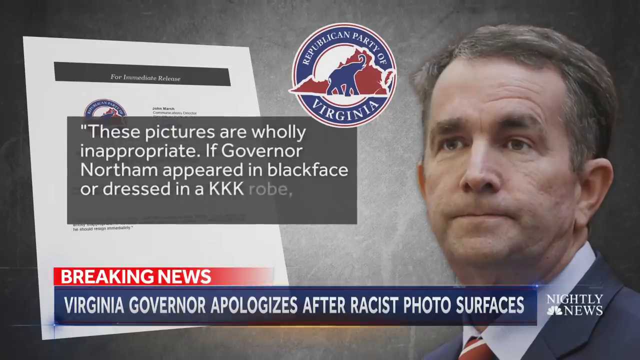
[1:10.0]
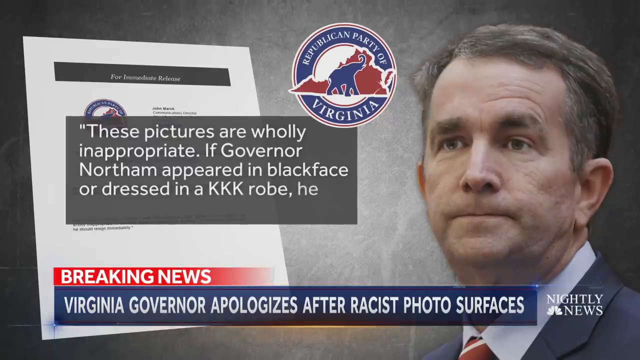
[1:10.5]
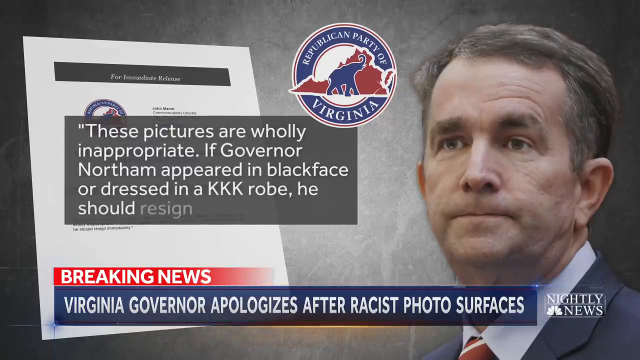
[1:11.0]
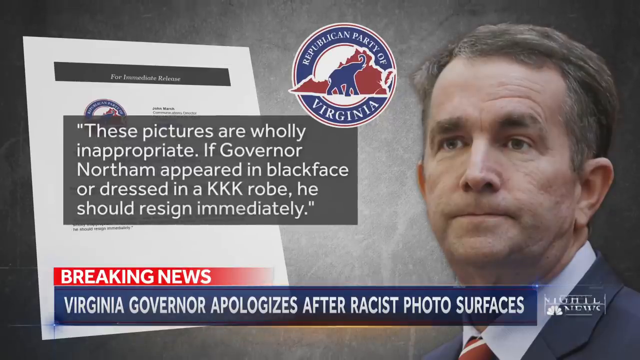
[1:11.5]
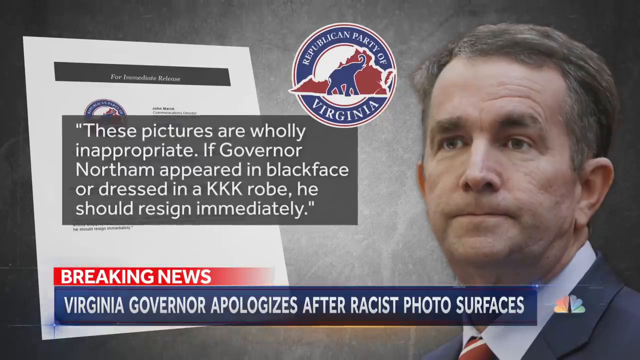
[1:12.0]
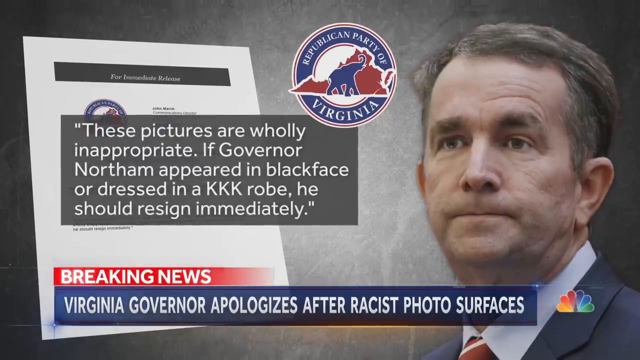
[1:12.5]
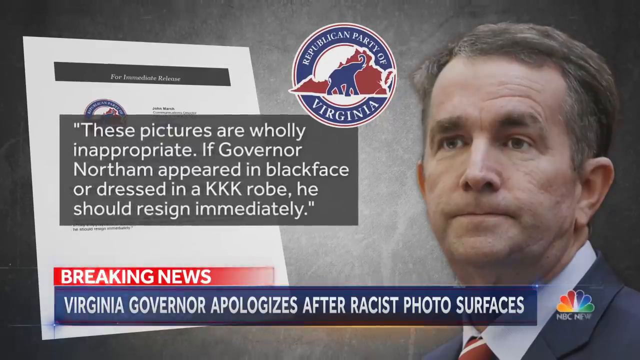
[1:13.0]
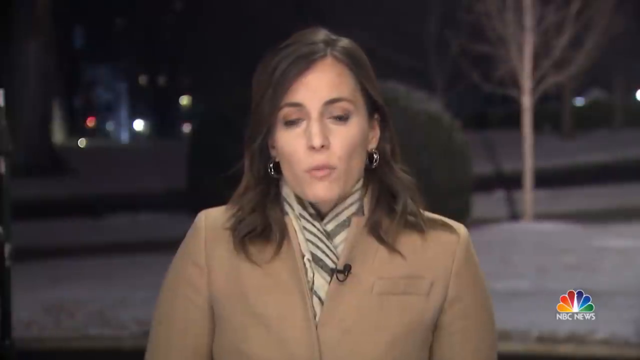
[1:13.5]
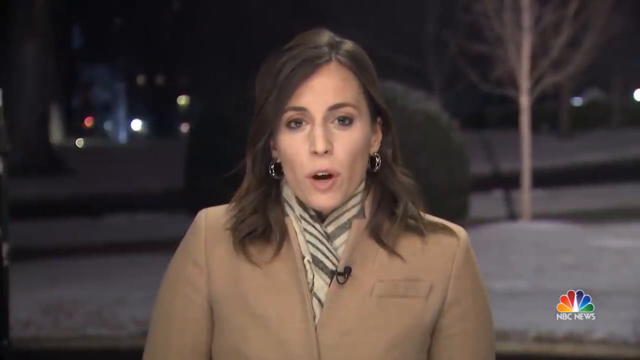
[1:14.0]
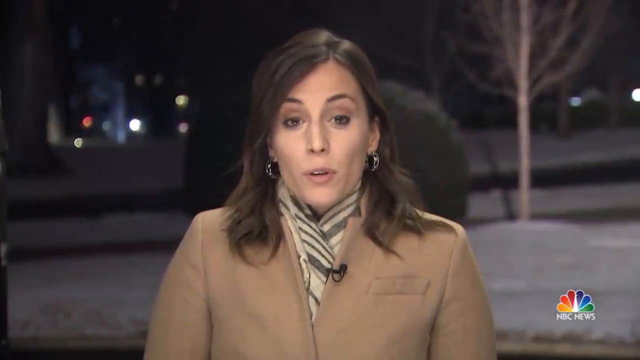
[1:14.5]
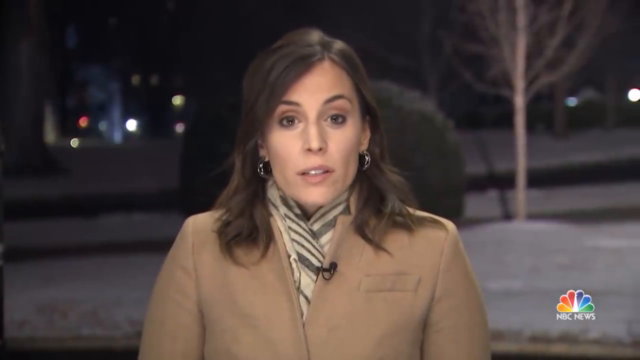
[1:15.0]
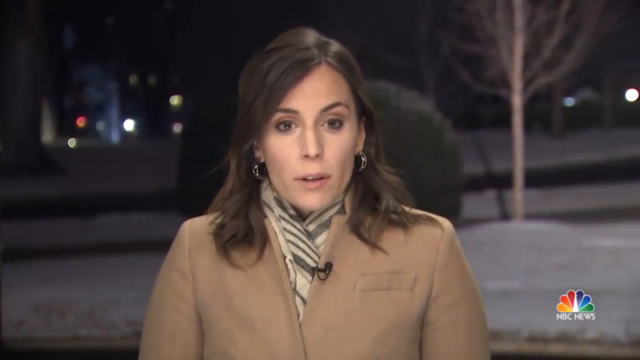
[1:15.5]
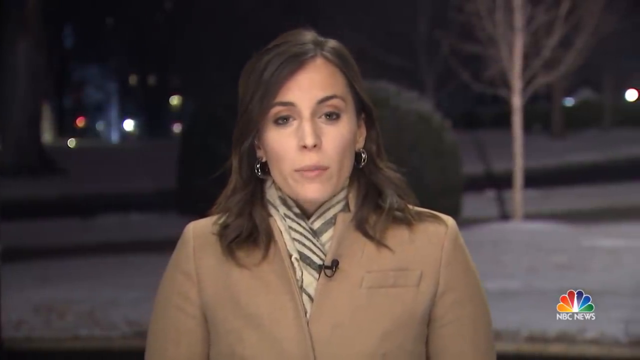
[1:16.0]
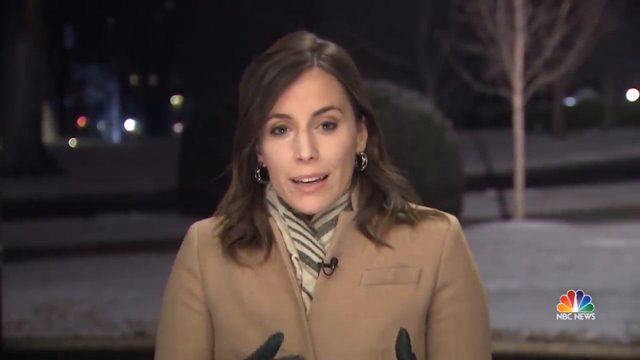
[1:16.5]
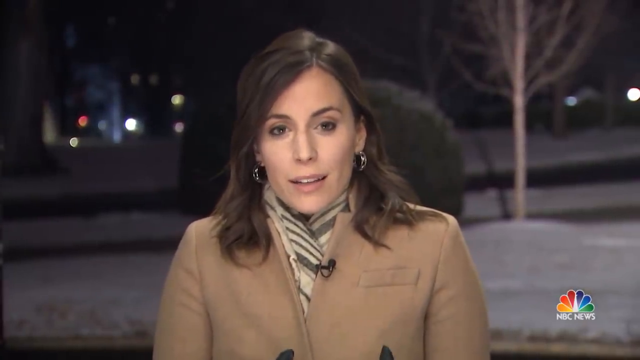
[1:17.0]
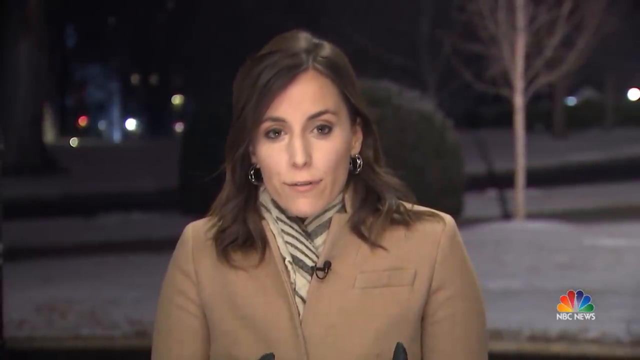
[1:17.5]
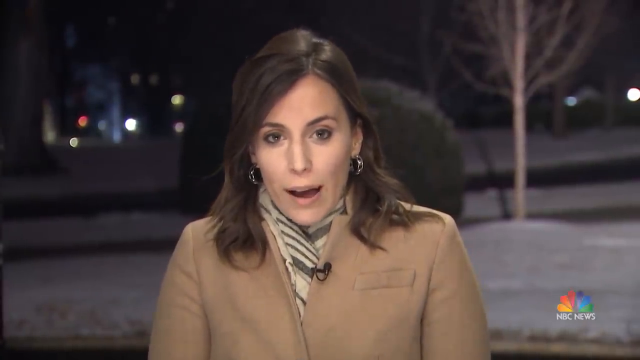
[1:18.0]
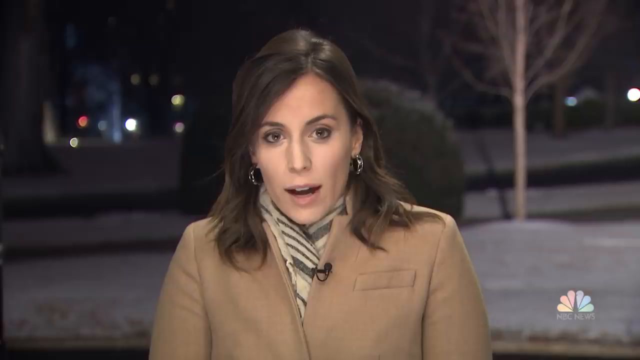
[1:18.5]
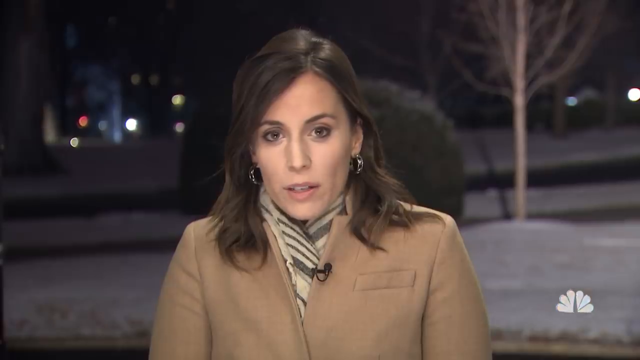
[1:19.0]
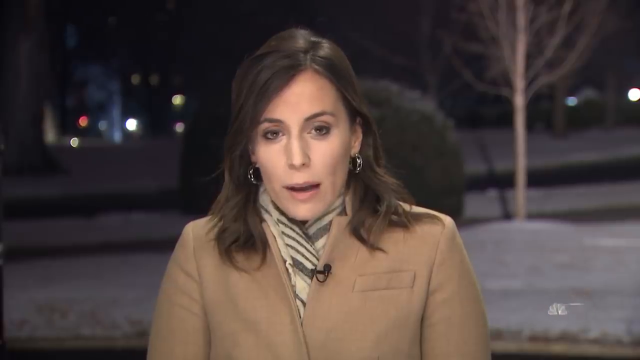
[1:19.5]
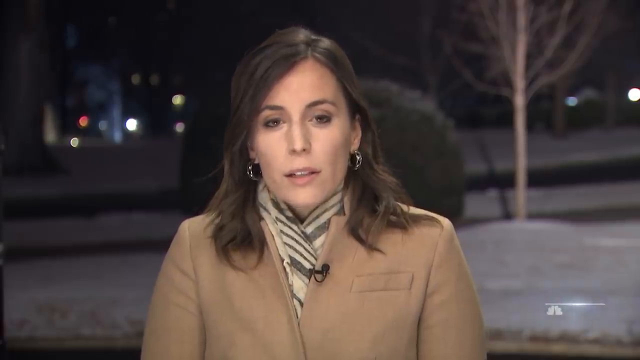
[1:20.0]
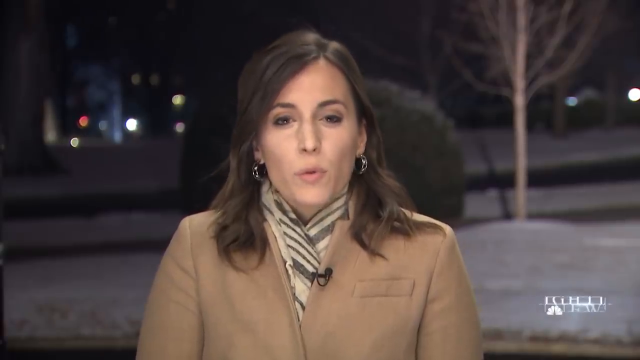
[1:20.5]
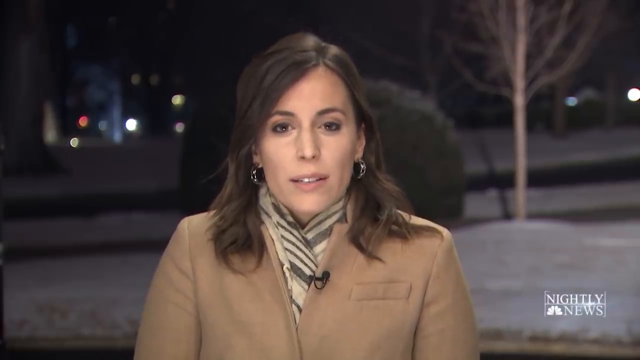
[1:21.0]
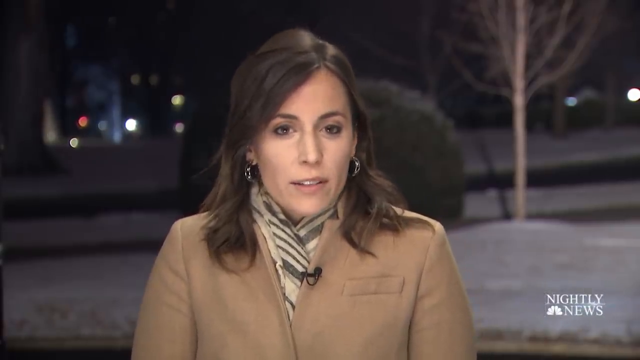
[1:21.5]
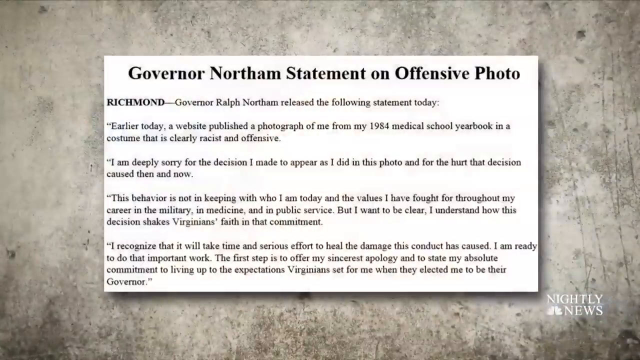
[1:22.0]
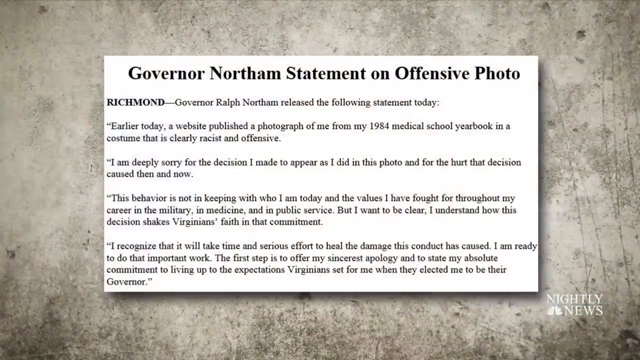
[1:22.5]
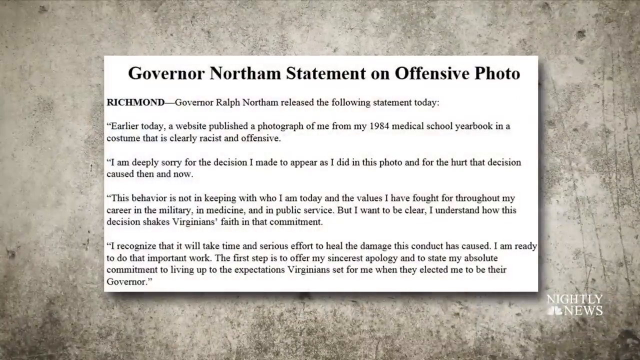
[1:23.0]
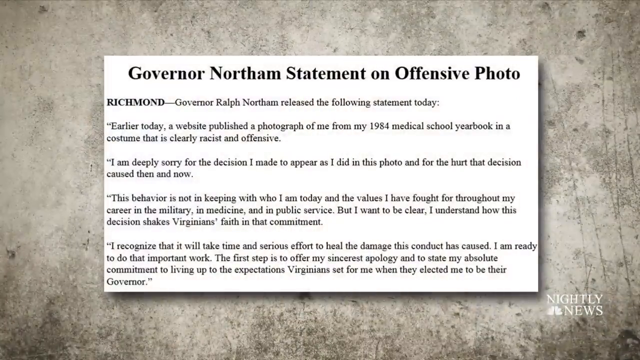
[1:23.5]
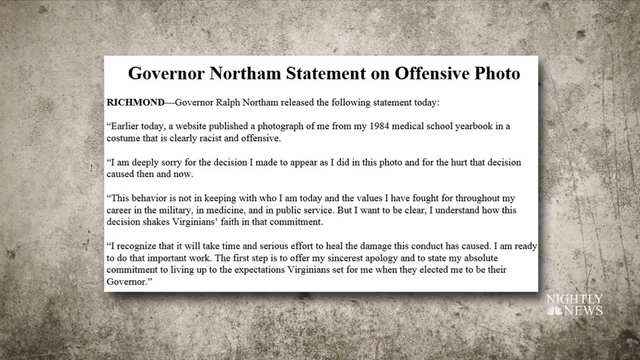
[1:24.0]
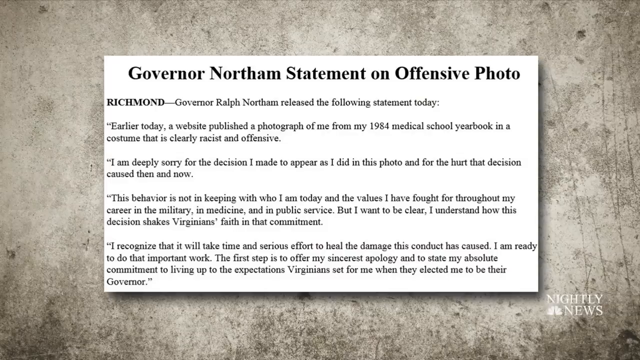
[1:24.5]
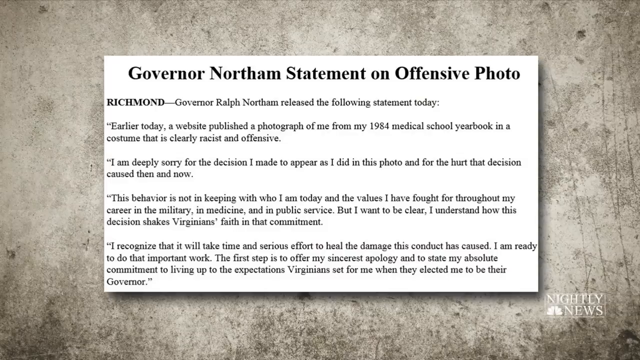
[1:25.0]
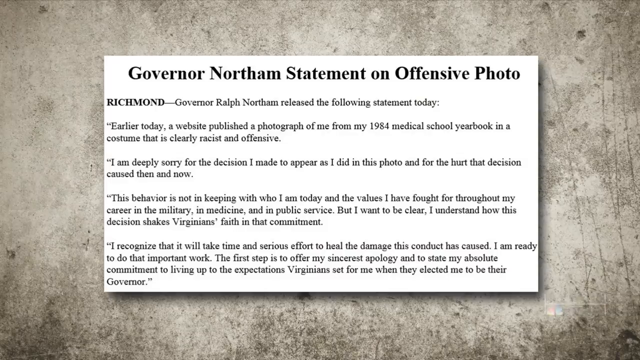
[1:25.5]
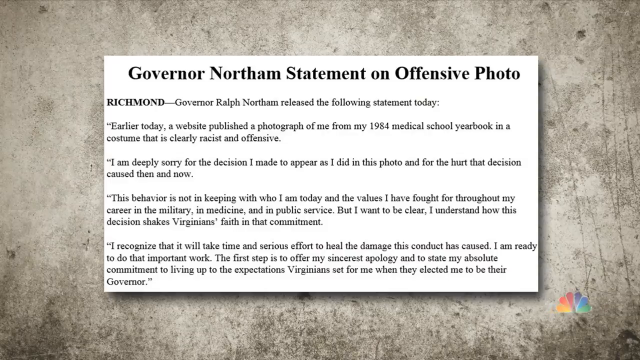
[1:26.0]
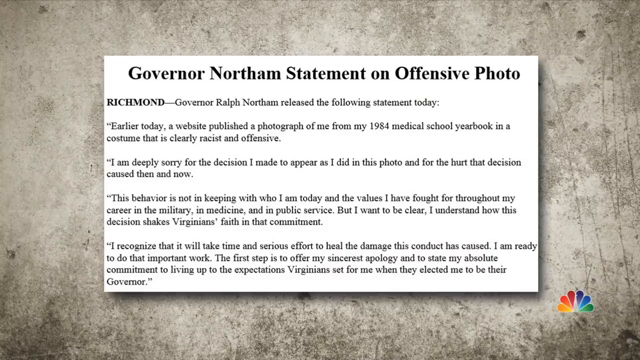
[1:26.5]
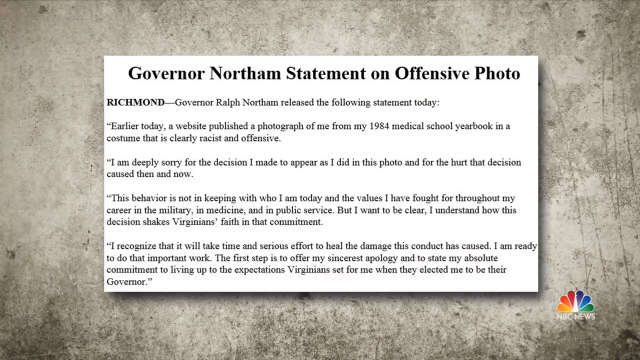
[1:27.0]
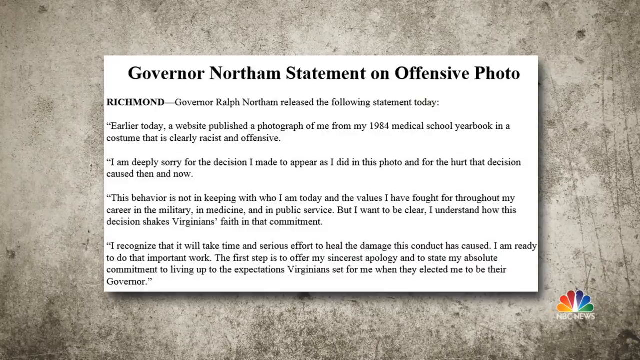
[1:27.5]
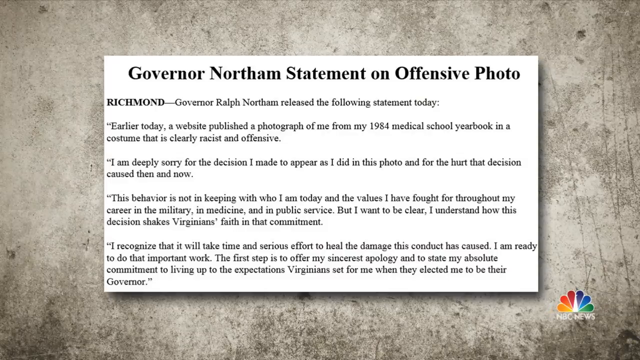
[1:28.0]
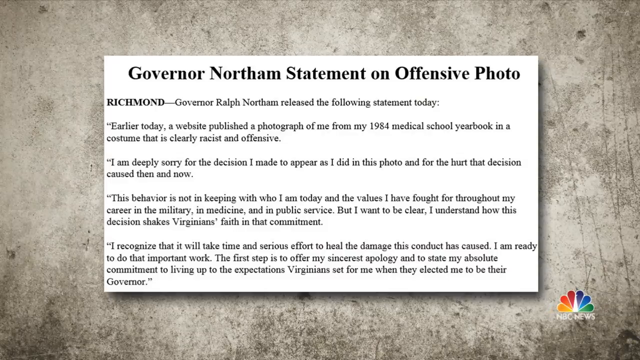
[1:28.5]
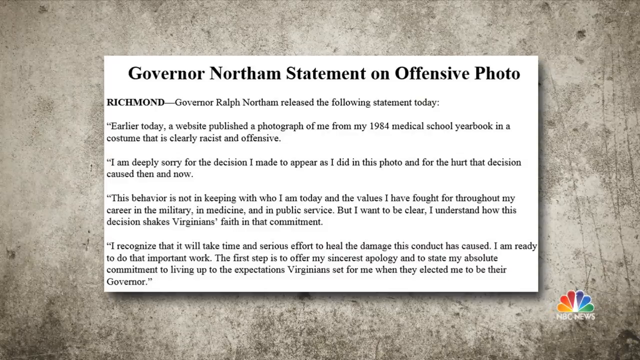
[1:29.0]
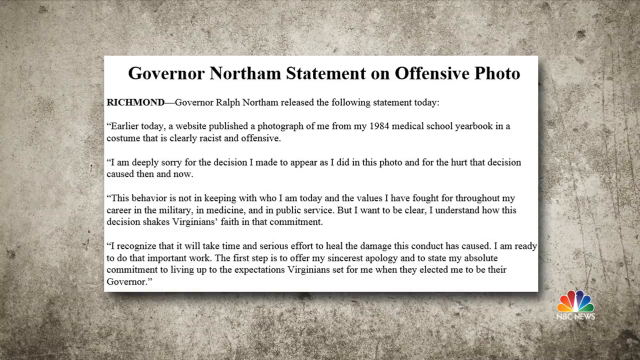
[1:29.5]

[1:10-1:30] The text overlay continues, reading in full: "These pictures are wholly inappropriate. If Governor Northam appeared in blackface or dressed in a KKK robe, he should immediately resign." The video cuts to a female field reporter wearing a beige coat and a striped scarf around her neck, possibly in wintertime or early morning. She talks while making direct eye contact with the camera; behind her is a small street with some trees on the side and a few low-rise buildings. The next screen shows a statement from the governor's office that reads "earlier today a website published a photograph of me from my 1984 medical school yearbook in a costume that is clearly racist and offensive. I'm deeply sorry for the decision I made to appear as I did in this photo and for the hurt the decision caused then and now." Its last paragraph includes "I am ready to do the important work. The first step is to offer my sincerest apology and to state my absolute commitment to living up to expectations."